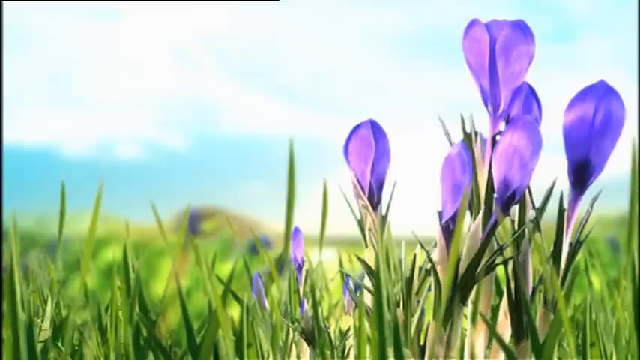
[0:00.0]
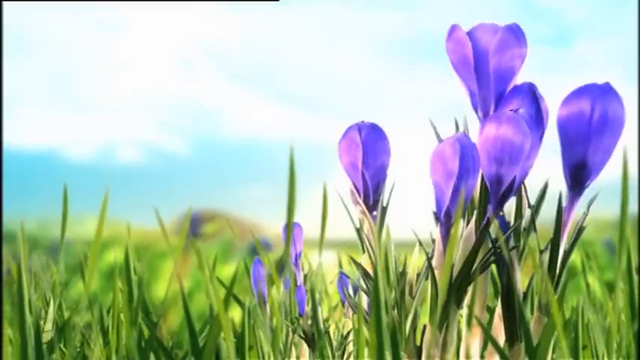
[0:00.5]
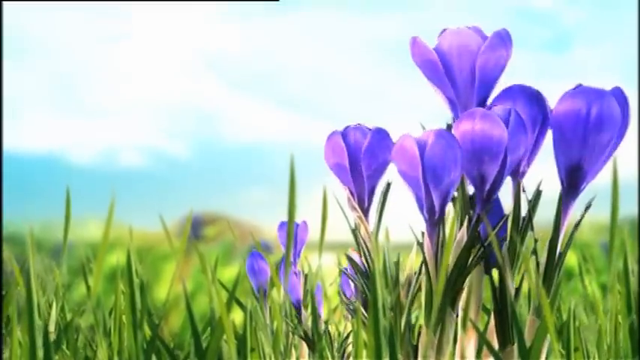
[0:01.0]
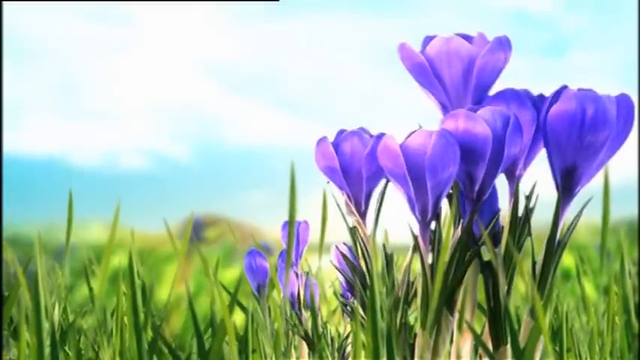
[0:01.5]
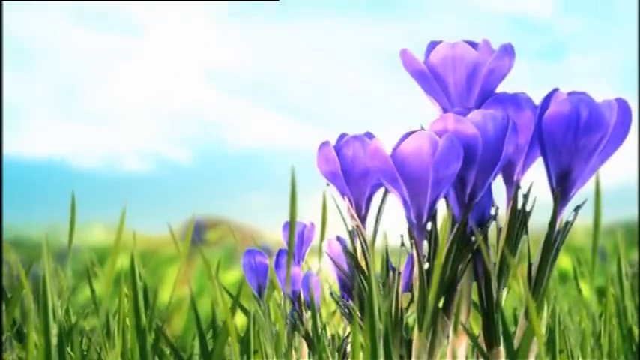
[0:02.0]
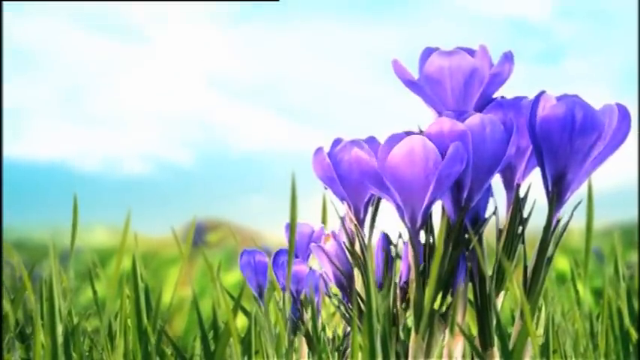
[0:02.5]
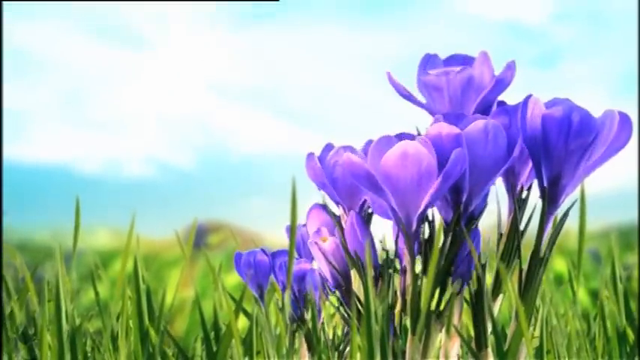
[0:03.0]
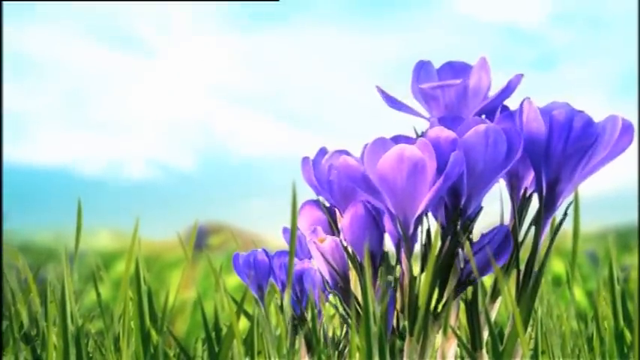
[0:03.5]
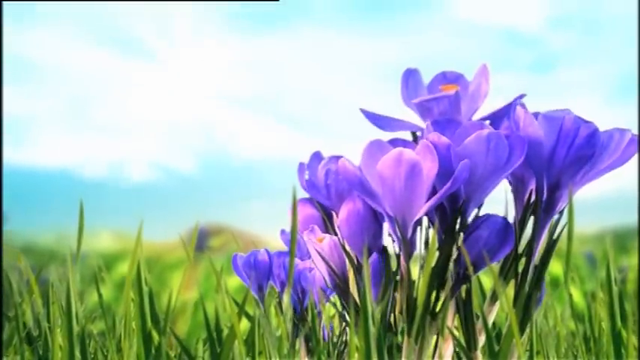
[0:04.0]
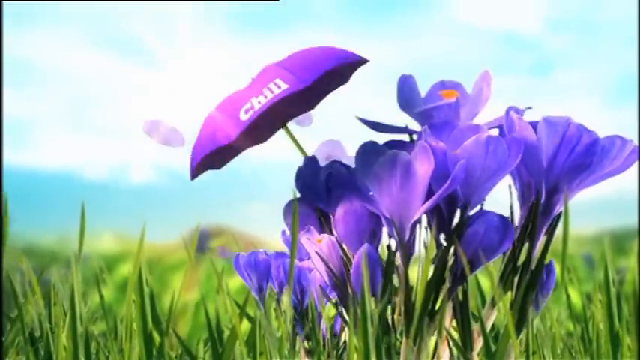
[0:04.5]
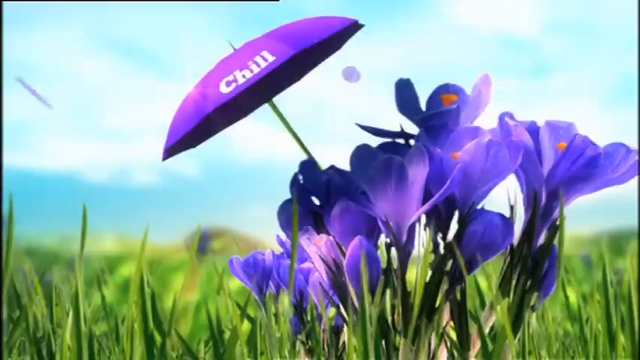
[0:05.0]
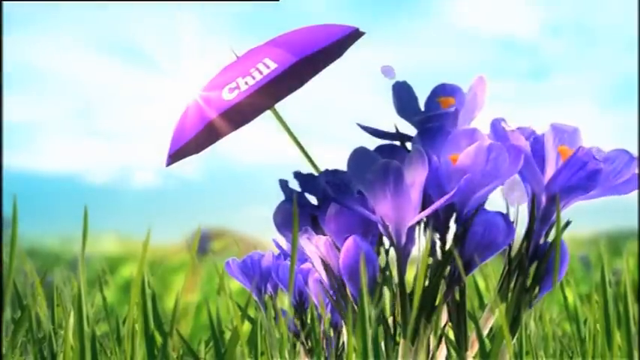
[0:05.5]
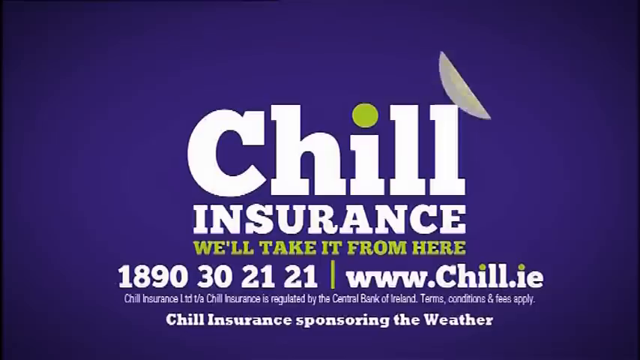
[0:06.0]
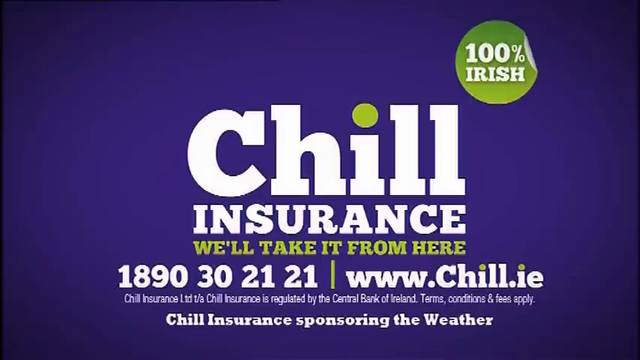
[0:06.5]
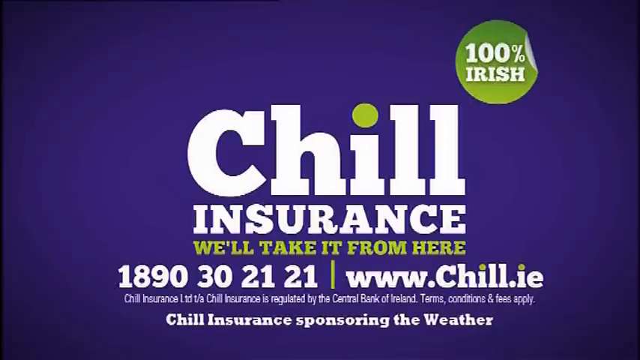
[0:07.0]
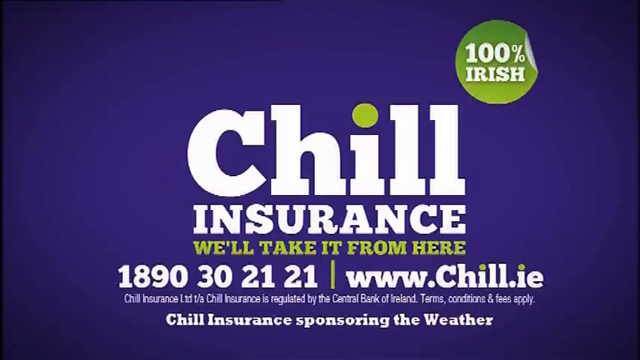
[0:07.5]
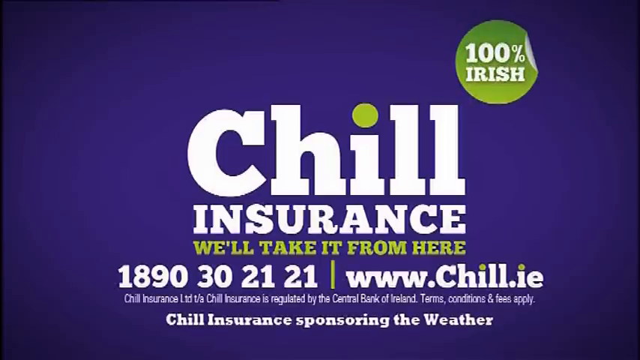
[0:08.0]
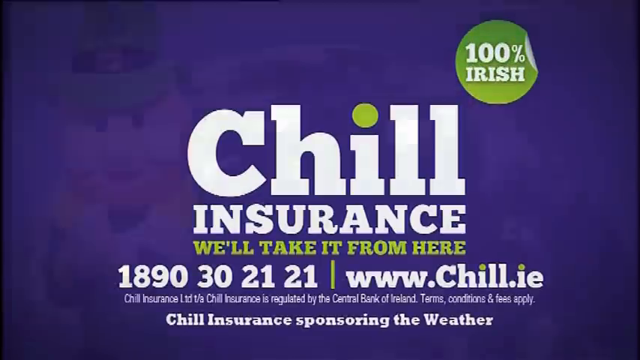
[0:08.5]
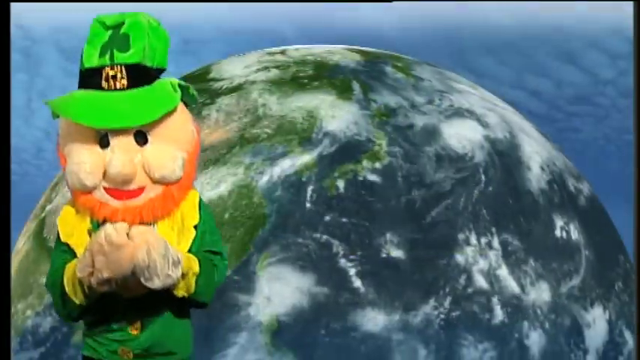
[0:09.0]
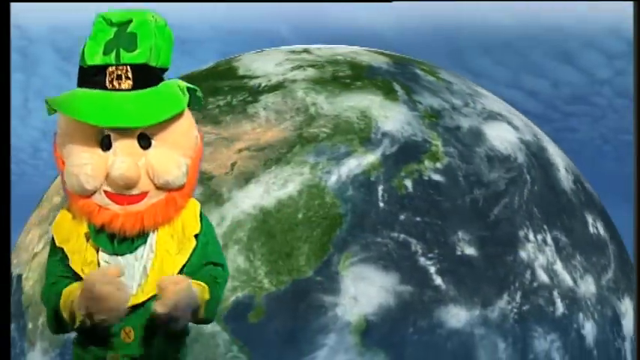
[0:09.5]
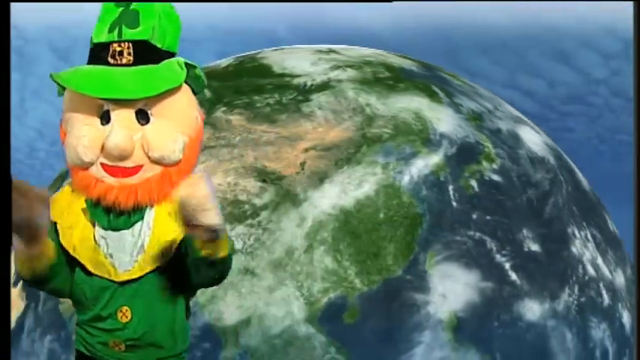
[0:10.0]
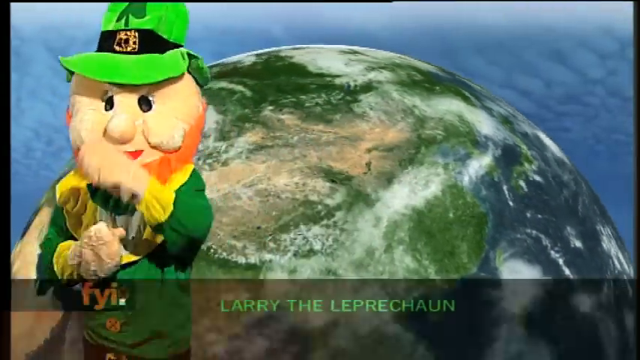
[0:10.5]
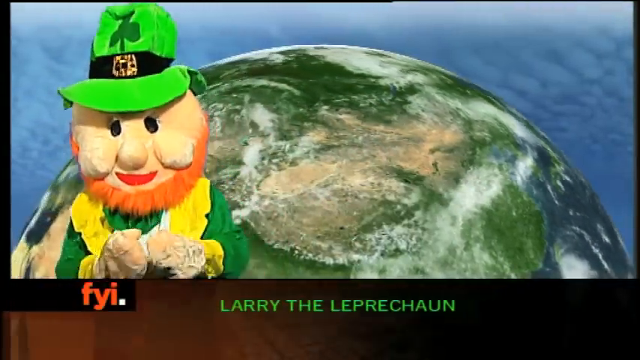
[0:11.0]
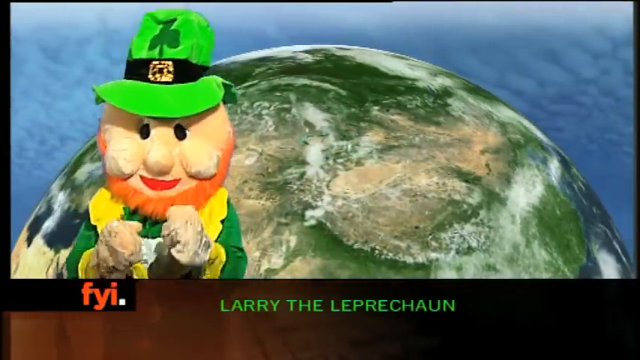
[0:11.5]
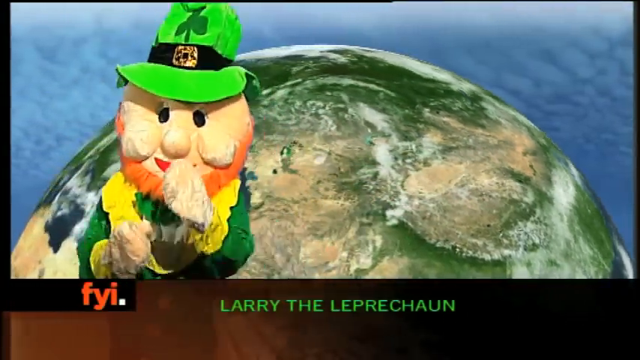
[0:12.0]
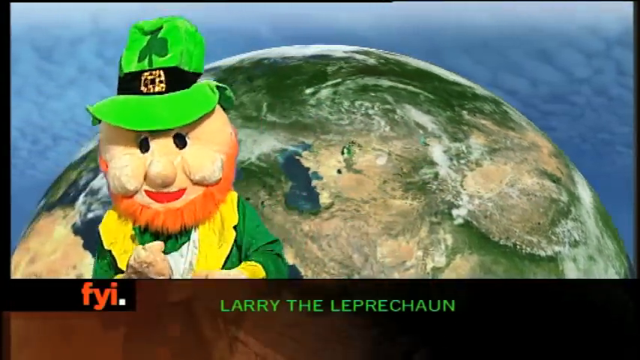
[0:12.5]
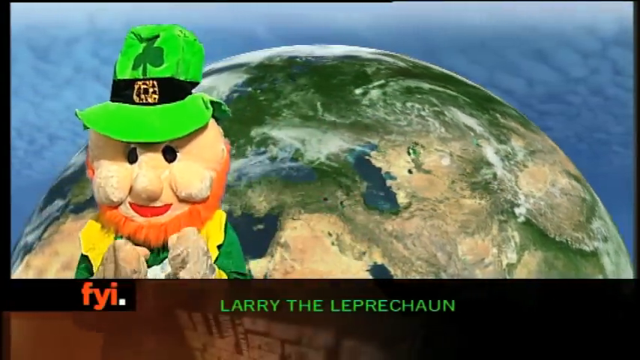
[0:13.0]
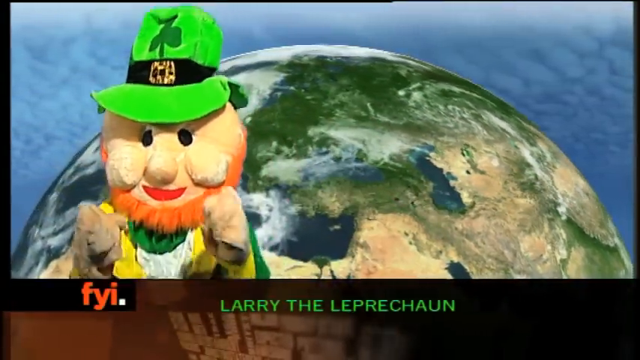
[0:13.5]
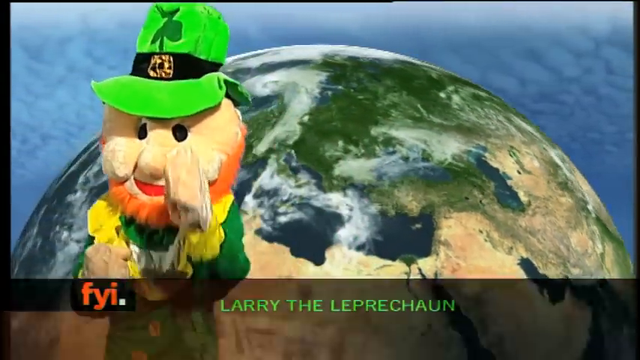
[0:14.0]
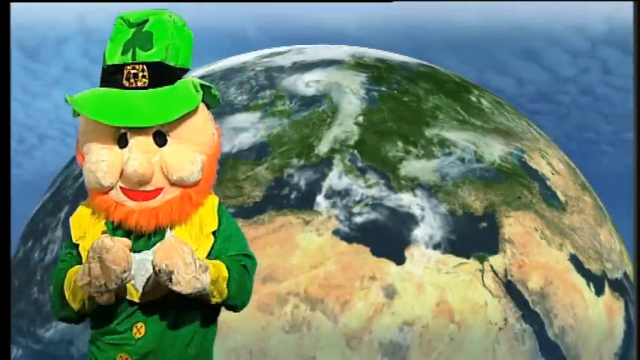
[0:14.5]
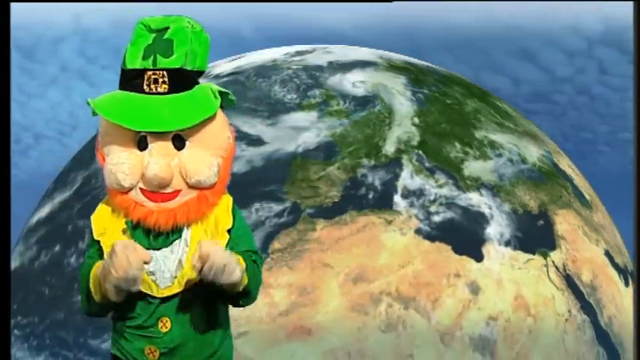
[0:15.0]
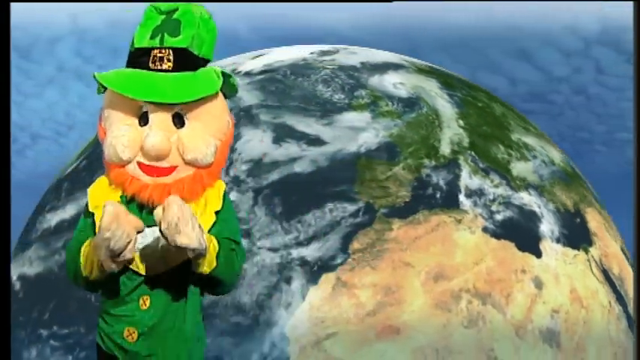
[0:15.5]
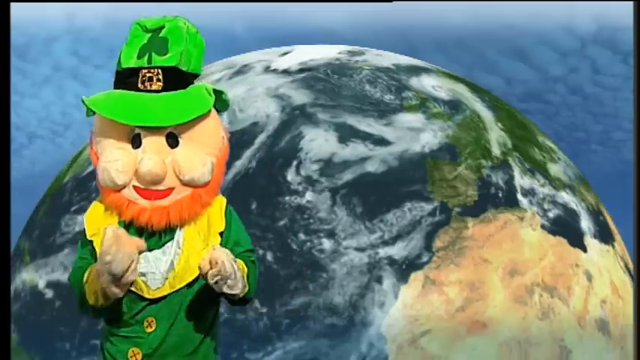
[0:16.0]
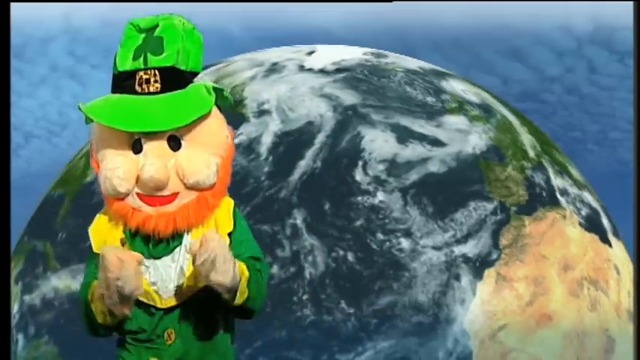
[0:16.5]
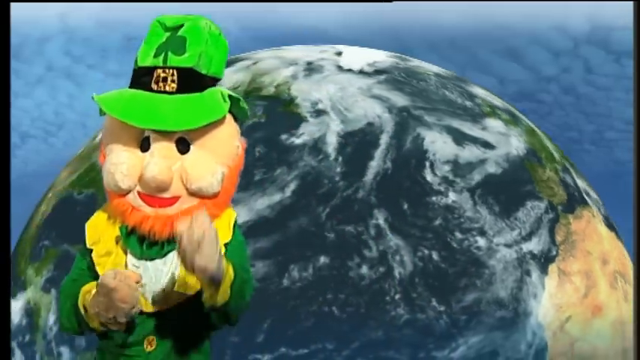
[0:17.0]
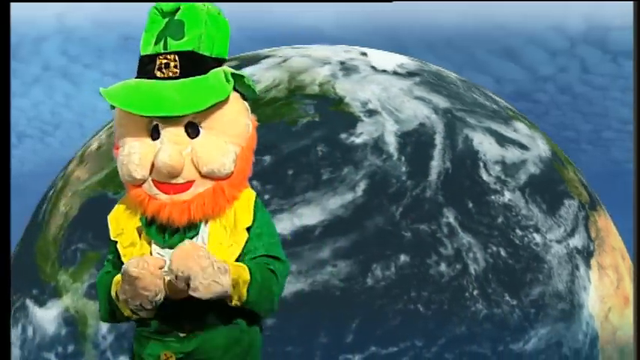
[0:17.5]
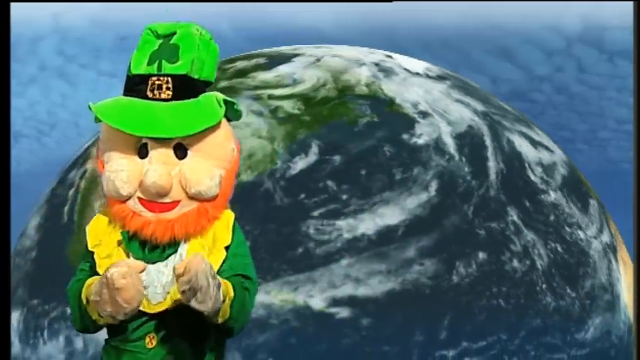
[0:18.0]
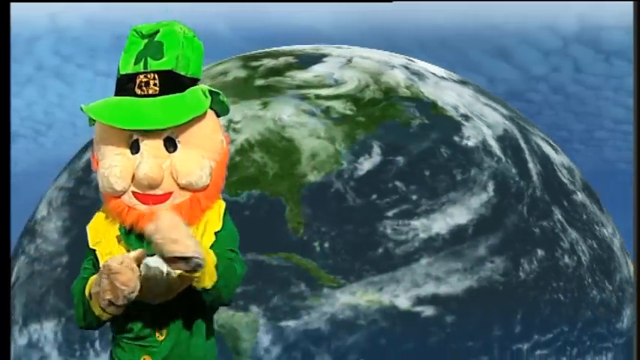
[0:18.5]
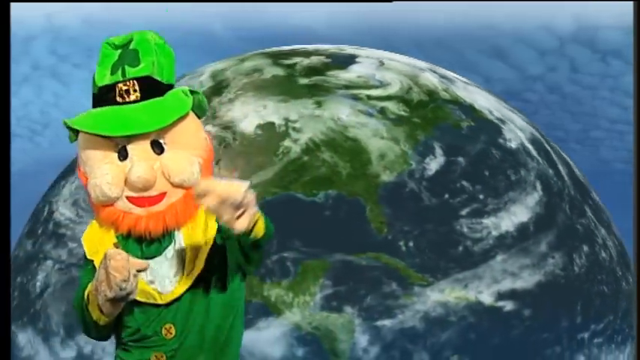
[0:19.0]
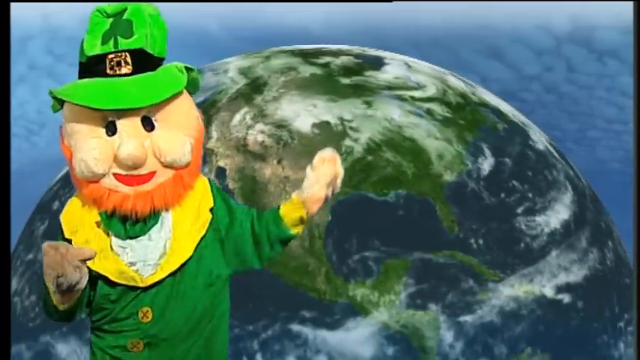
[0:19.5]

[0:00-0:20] Spiky green grass fills the frame, and on its right-hand side there seem to be purple flowers blooming. As they sprout, an umbrella with "chill" written on it comes out of the flowers, and in the middle of the flowers there are orange particles. After the umbrella appears, an image reading "chill insurance" is shown on a purple background, with writing in white and green. In the top right corner is "100% Irish" along with some digits, and the sentence "we'll take it from here" is written in green. Next comes a cartoon in a lion costume with an orange mustache; behind him a globe of the earth rotates, with a white and blue sky behind it.